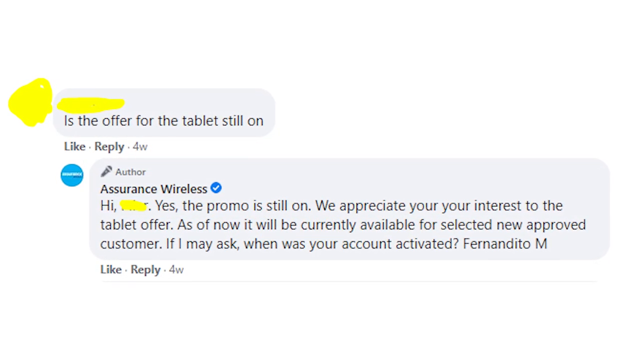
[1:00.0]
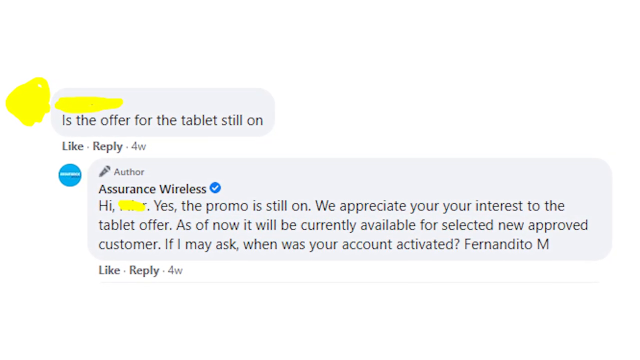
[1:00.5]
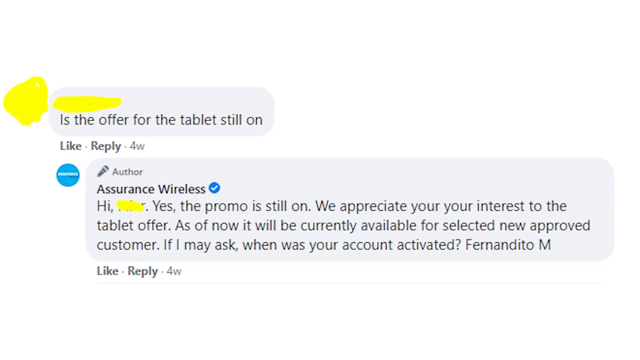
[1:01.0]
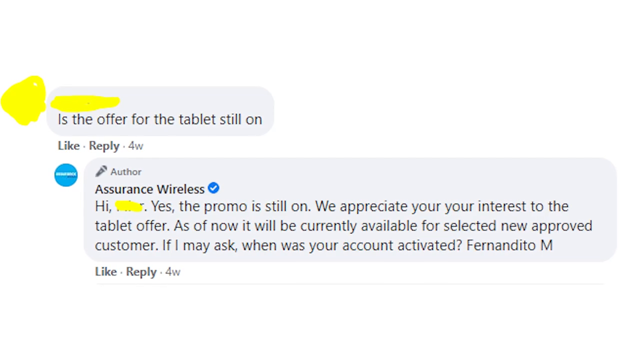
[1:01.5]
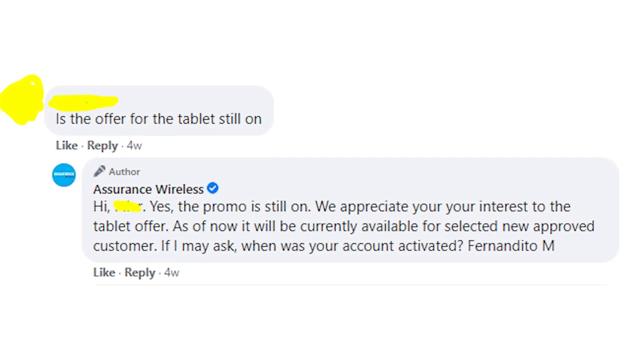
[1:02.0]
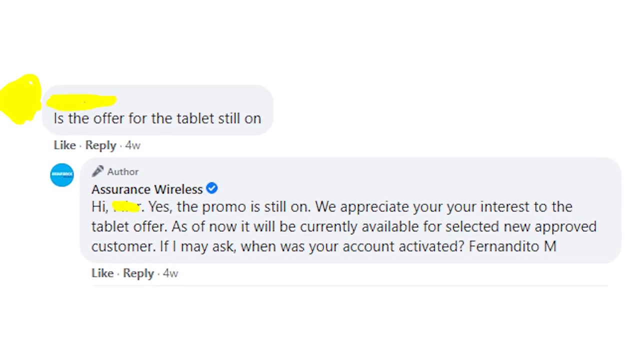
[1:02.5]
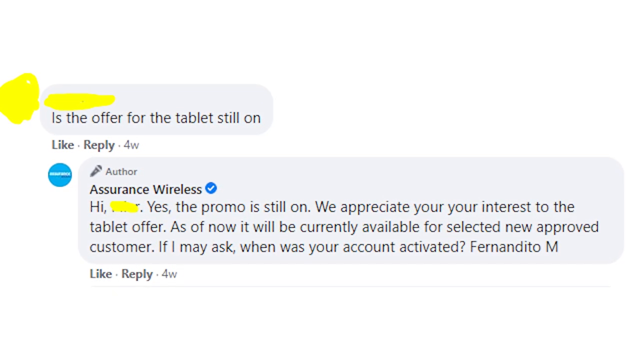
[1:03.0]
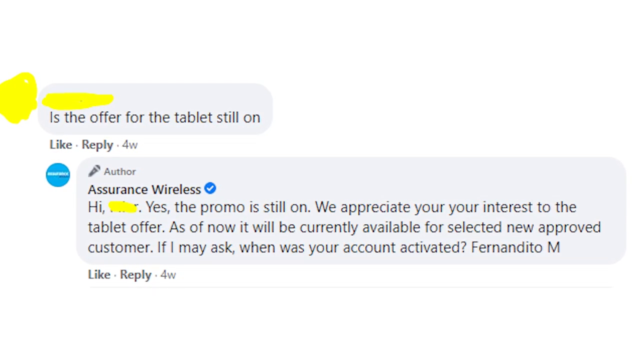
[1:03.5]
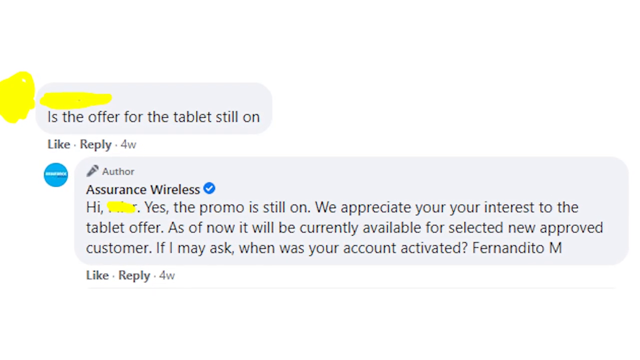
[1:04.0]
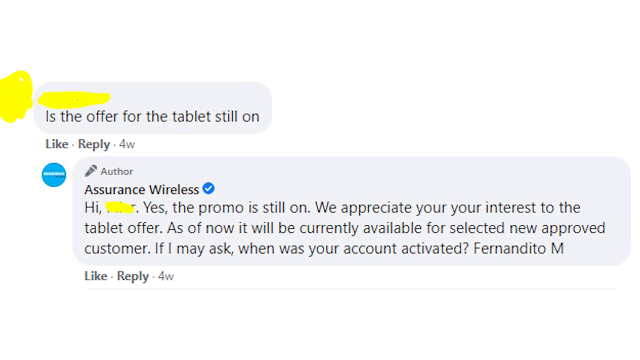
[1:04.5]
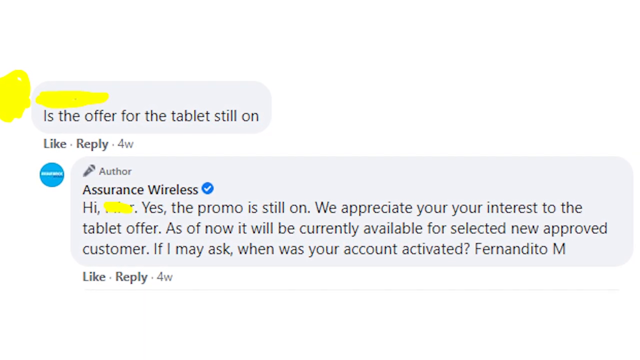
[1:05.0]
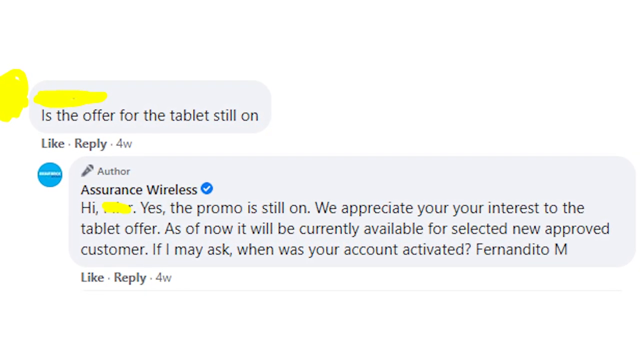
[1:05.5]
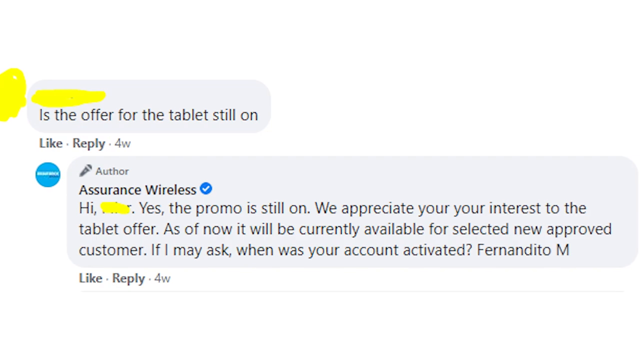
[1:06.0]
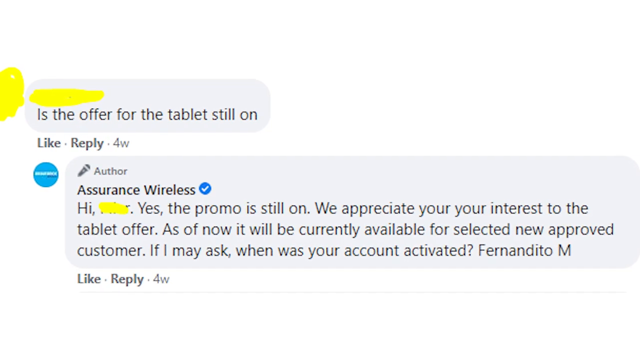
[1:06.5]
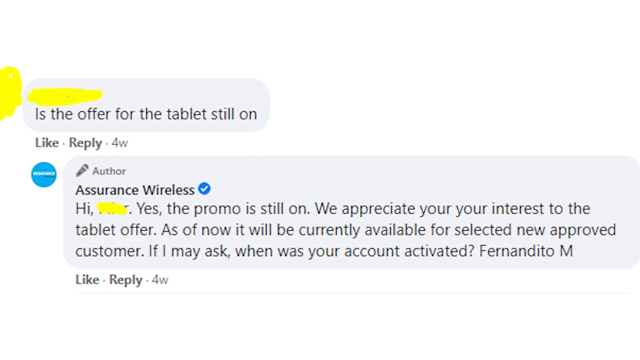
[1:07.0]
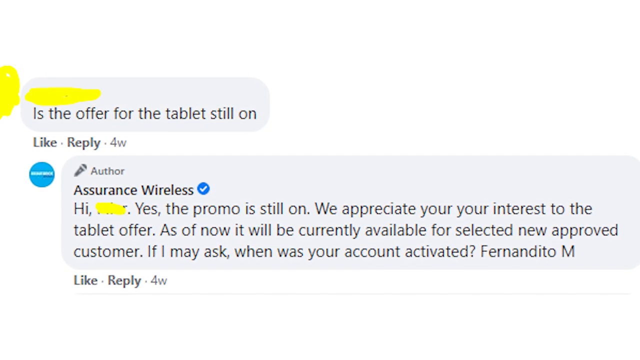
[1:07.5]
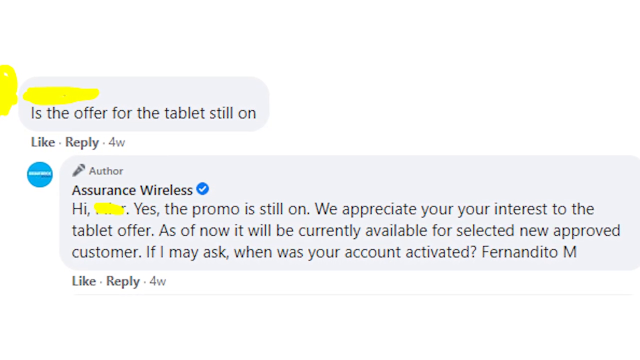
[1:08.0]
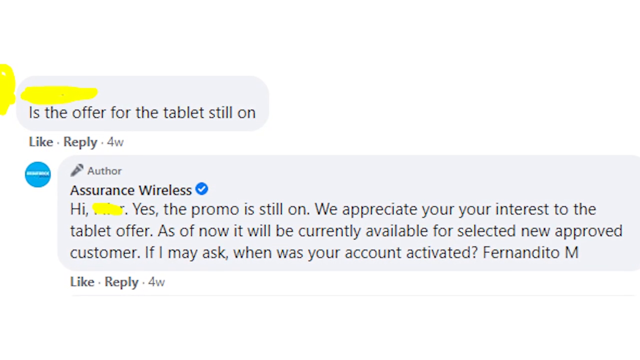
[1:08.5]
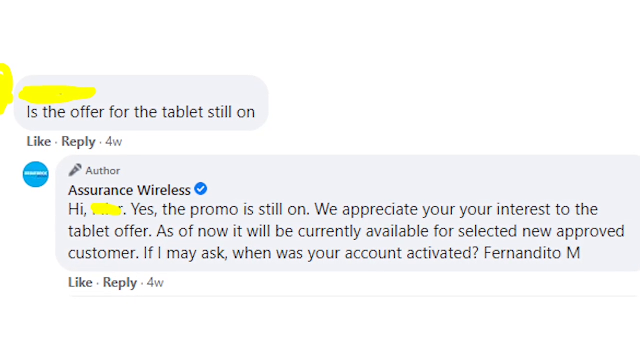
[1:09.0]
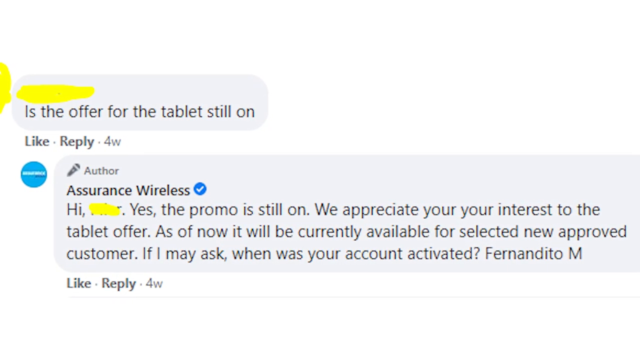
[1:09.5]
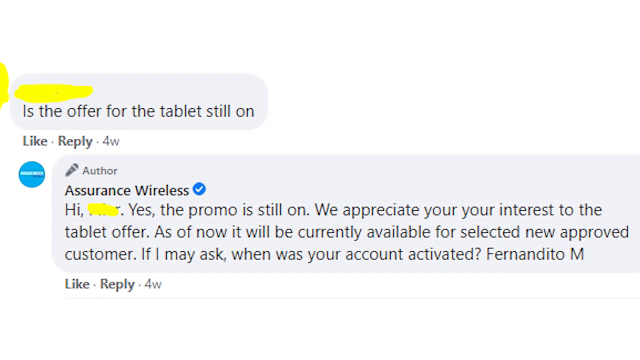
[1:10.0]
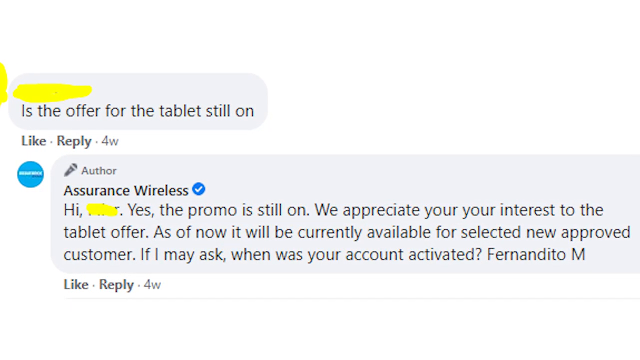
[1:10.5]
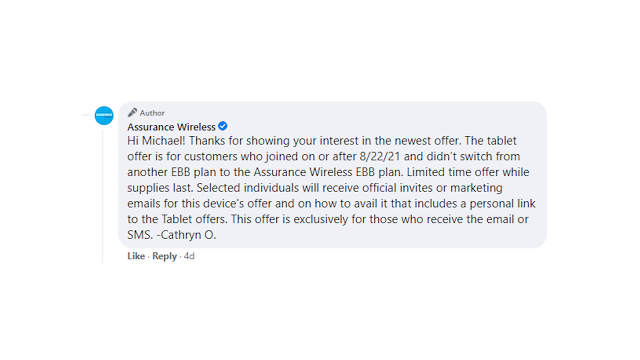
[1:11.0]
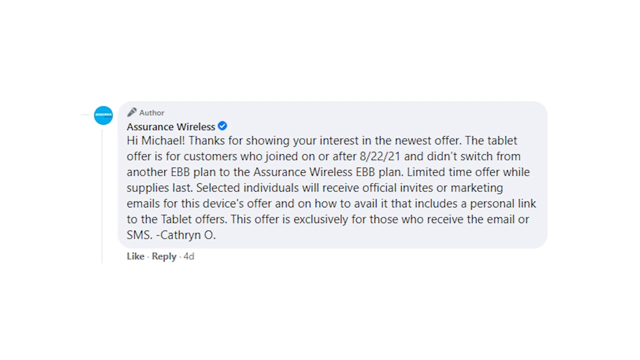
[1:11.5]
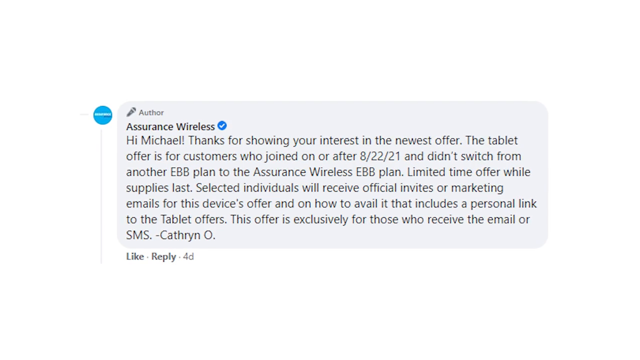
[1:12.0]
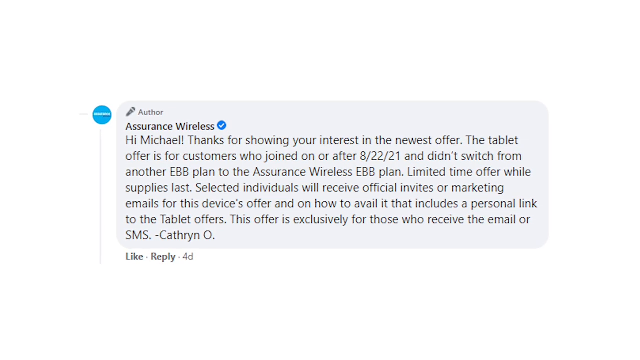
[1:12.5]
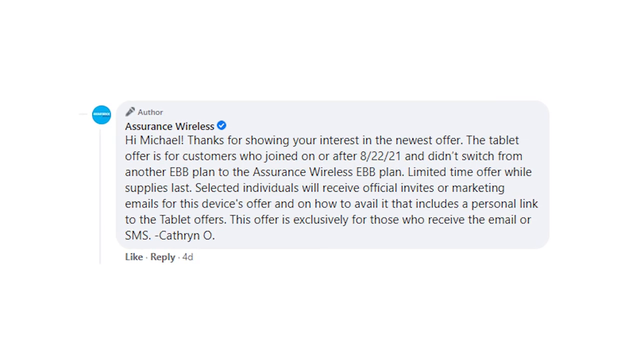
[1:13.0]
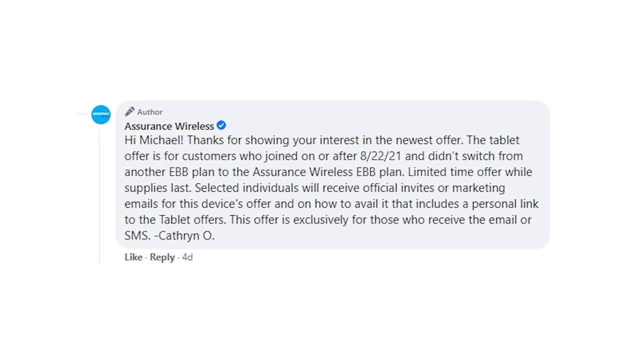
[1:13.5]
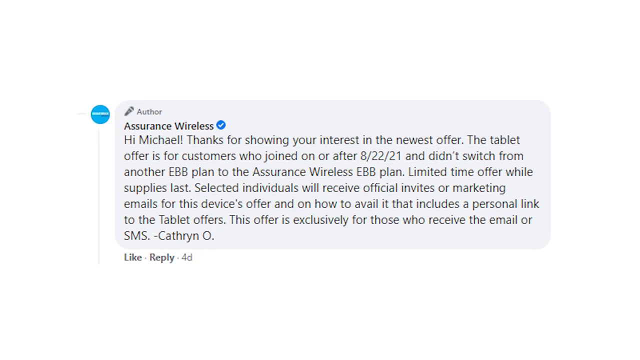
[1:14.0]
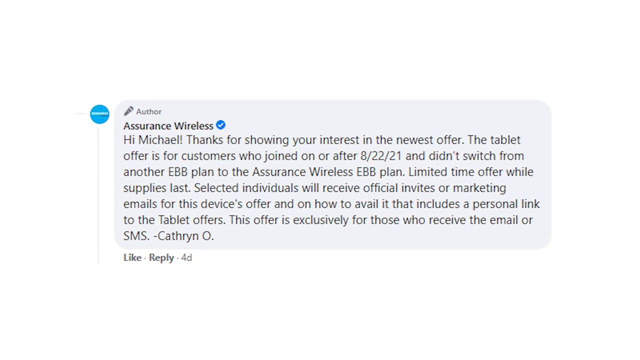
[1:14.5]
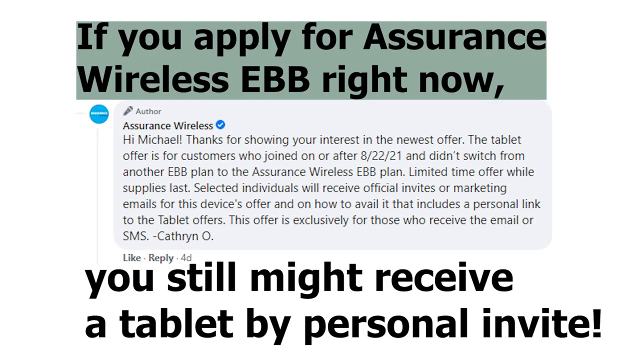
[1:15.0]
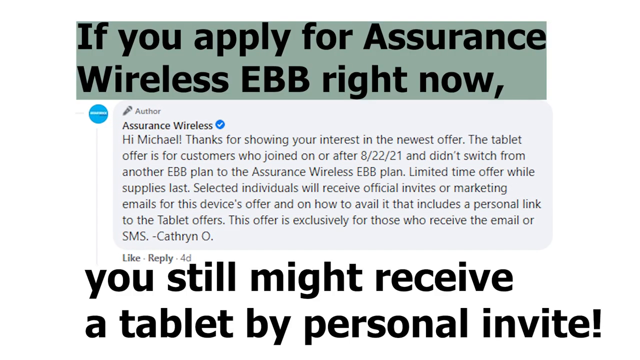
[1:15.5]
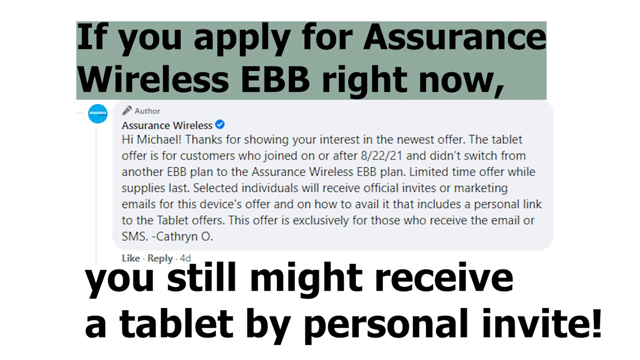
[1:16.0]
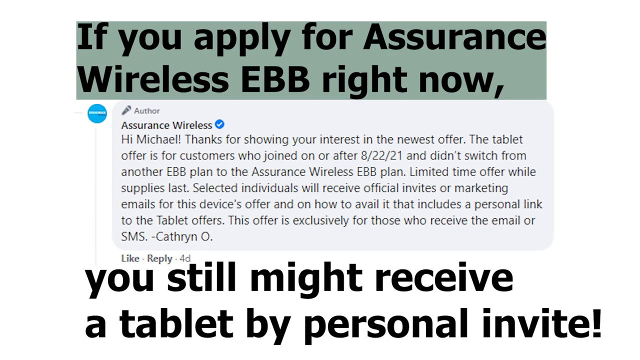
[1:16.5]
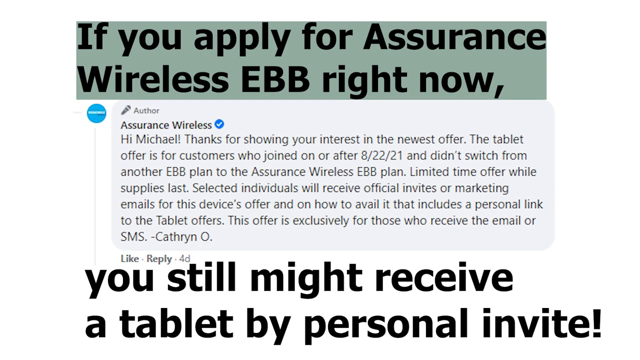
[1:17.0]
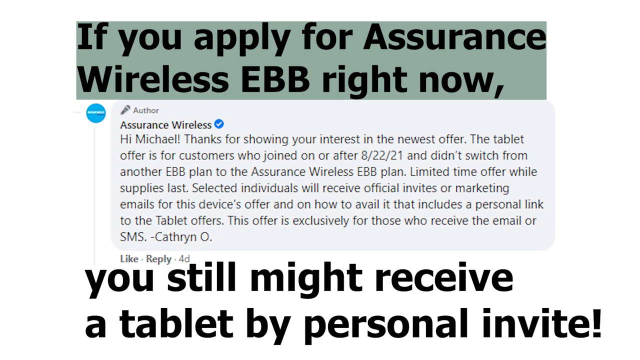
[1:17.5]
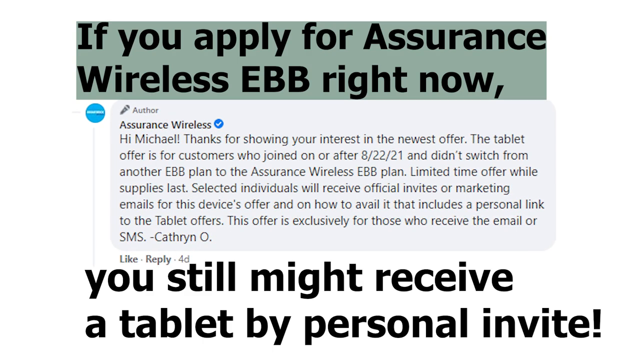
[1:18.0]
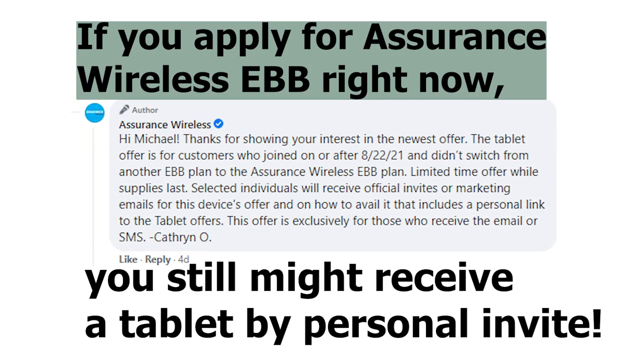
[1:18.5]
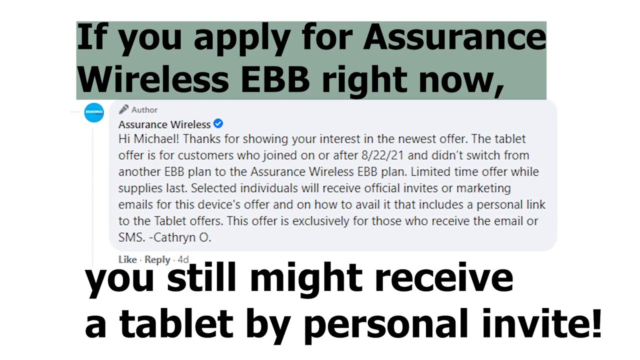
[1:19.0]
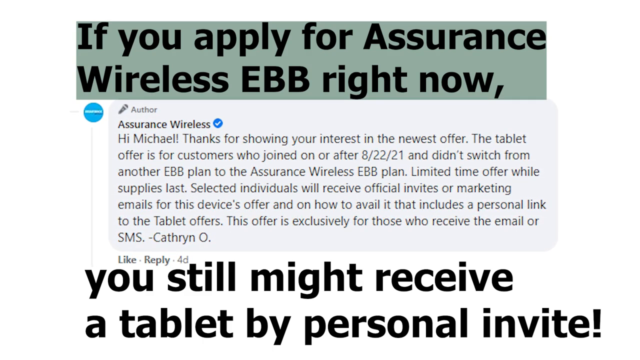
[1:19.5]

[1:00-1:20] A user, whose icon and name are blurred out with yellow coloring, asks a question. Assurance Wireless responds to the comment: "hi," followed by the person's blurred-out name, "yes, the promo is still on. We appreciate your interest to the tablet offer. As of now, it will be currently available for selected new approved customer. If I may ask, when was your account activated? Fernandito M." Both the original comment and the response are dated "4w", for four weeks ago. The view slowly zooms in on the image. Afterwards, there is an additional response from Assurance Wireless: "Hi, Michael! Thanks for showing your interest in the newest offer. The tablet offer is for customers who joined on or after. August 22, 2021 and didn't switch from another EBB plan to the Assurance Wireless EBB plan. Limited time offer while supplies last." It continues that selected individuals will receive official invites or marketing emails for the offer, including a personal link to the tablet offers, and that the offer is currently exclusive to those who receive the email or SMS. This response is written by Catherine O.